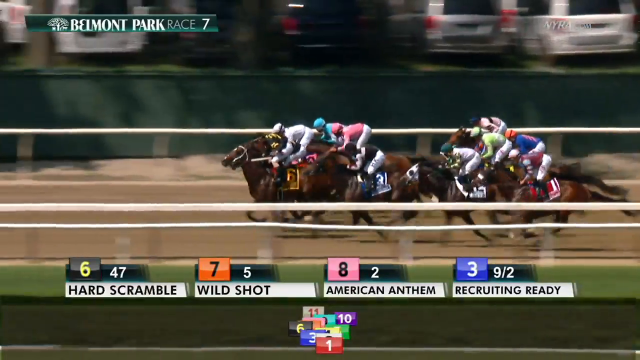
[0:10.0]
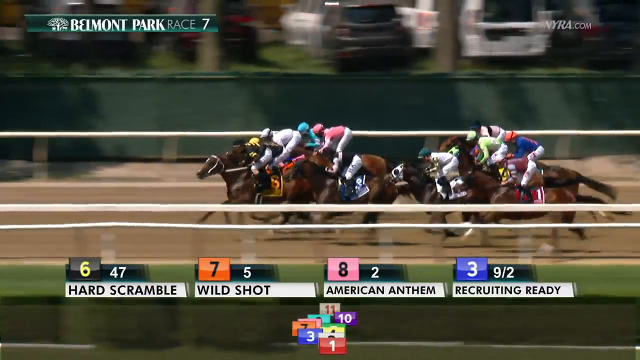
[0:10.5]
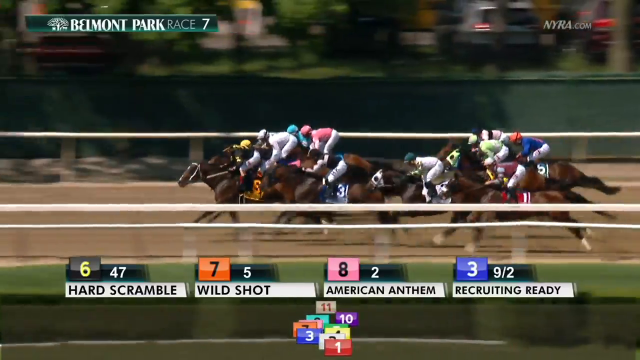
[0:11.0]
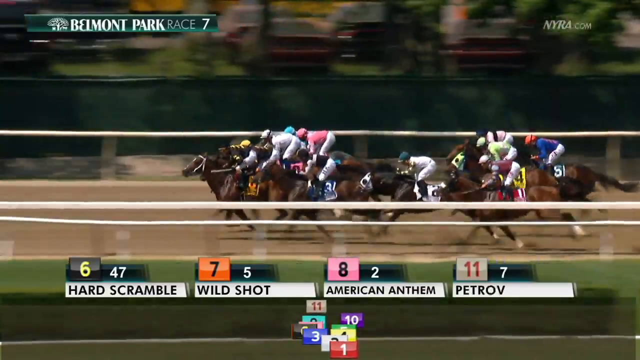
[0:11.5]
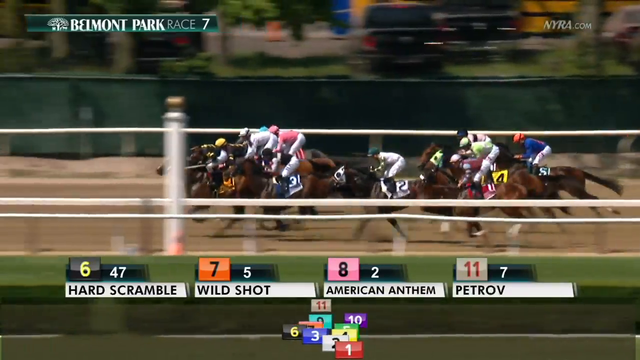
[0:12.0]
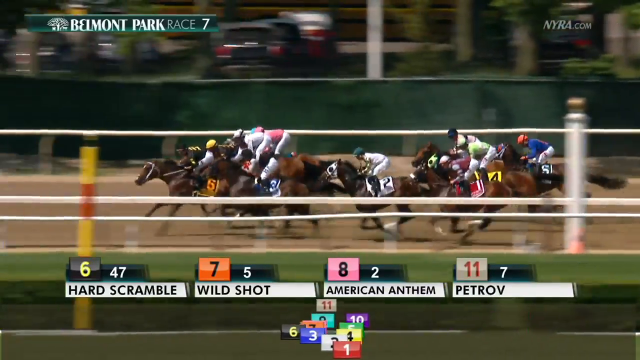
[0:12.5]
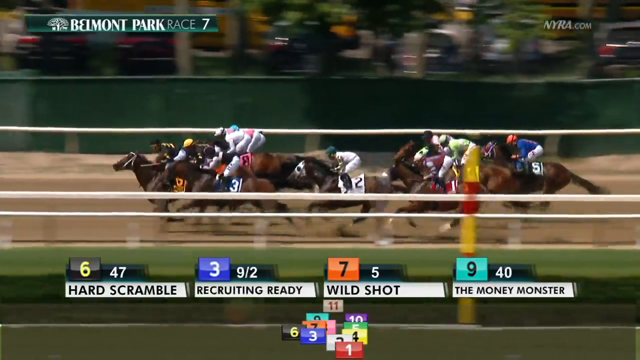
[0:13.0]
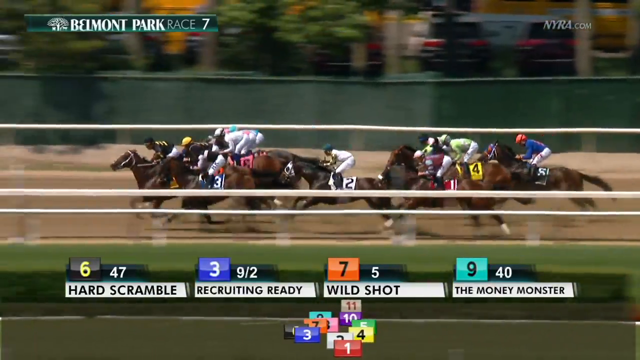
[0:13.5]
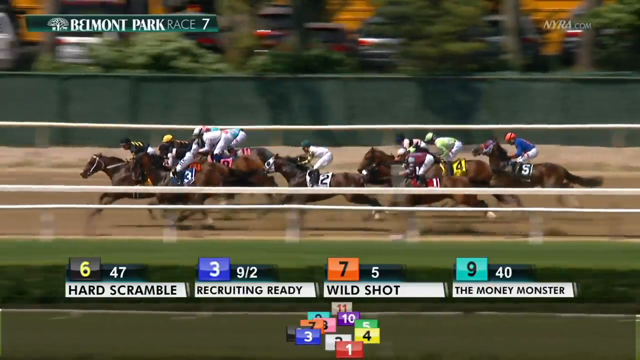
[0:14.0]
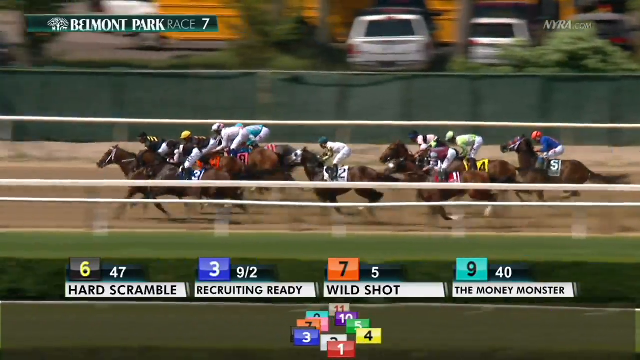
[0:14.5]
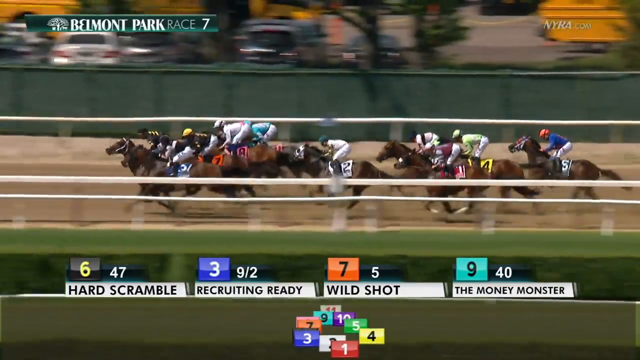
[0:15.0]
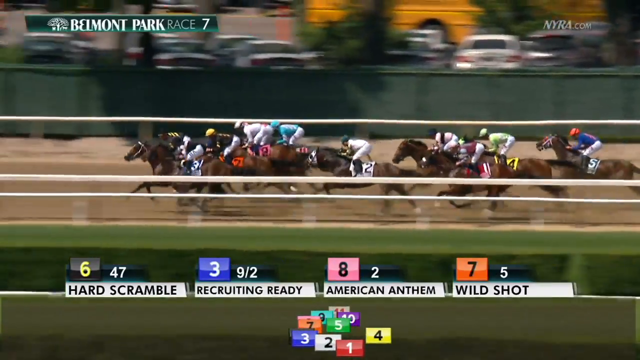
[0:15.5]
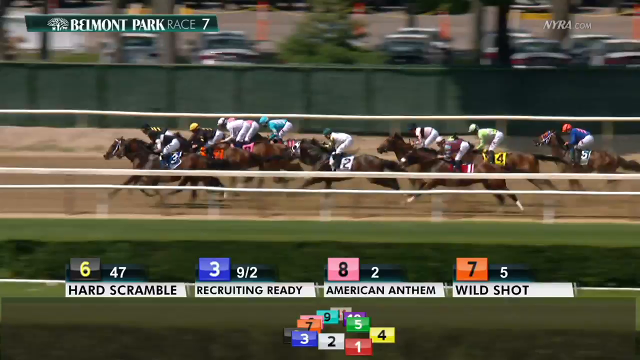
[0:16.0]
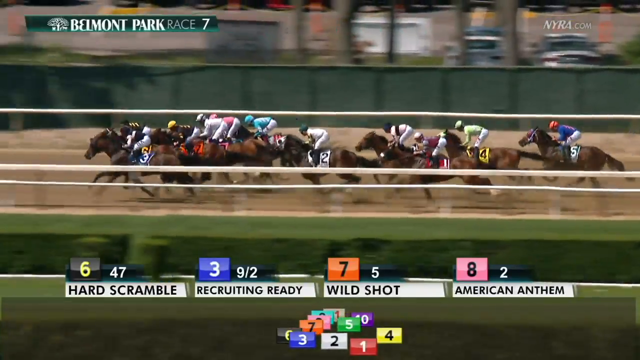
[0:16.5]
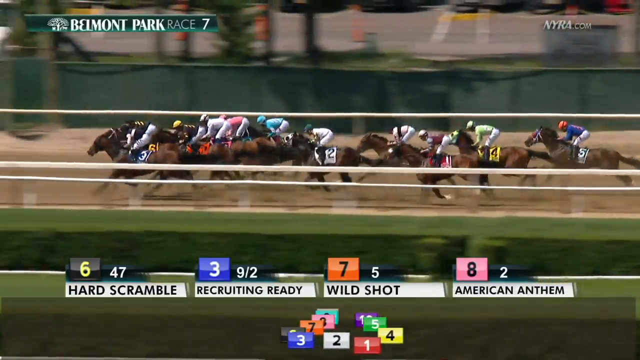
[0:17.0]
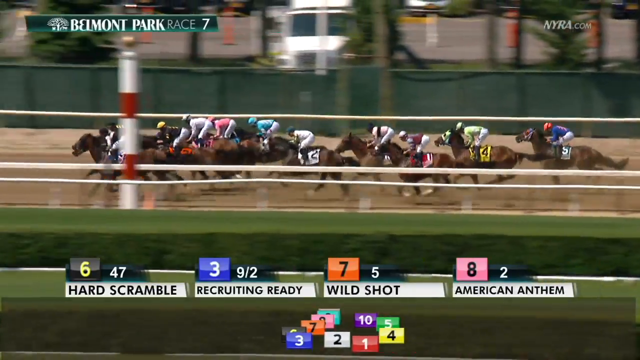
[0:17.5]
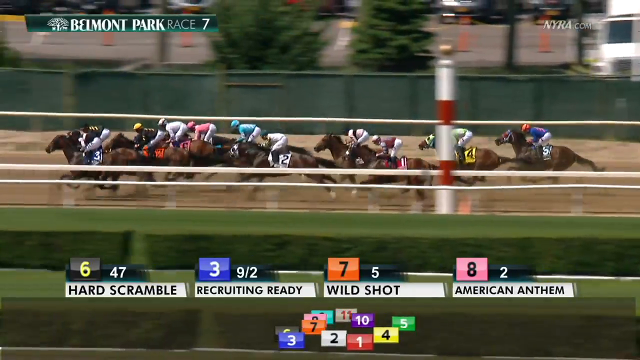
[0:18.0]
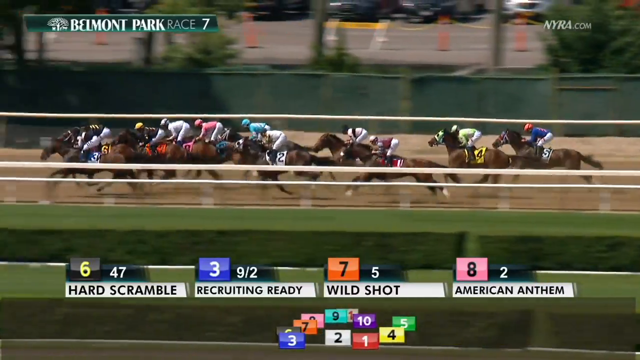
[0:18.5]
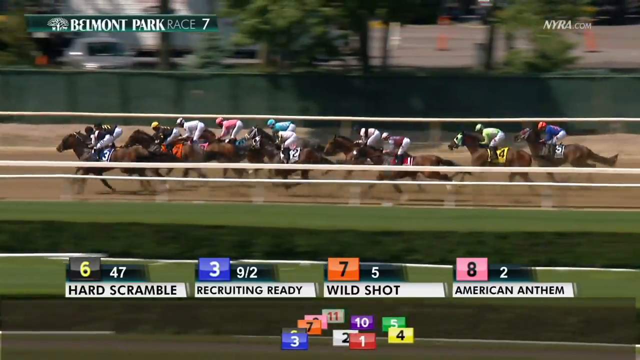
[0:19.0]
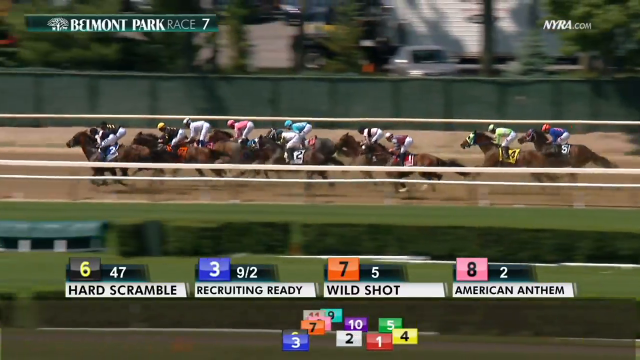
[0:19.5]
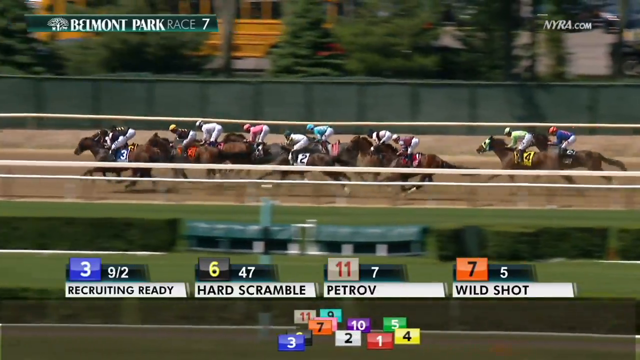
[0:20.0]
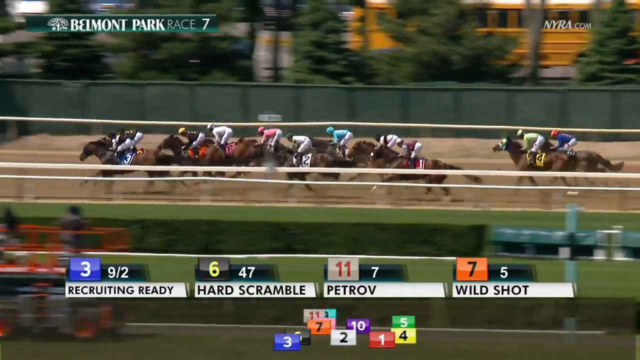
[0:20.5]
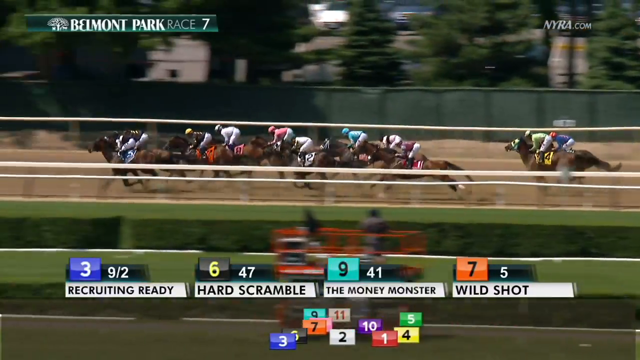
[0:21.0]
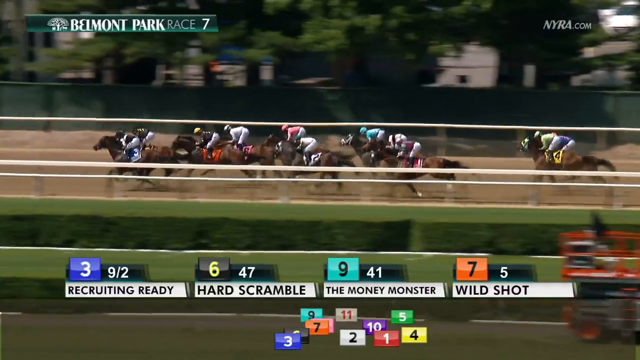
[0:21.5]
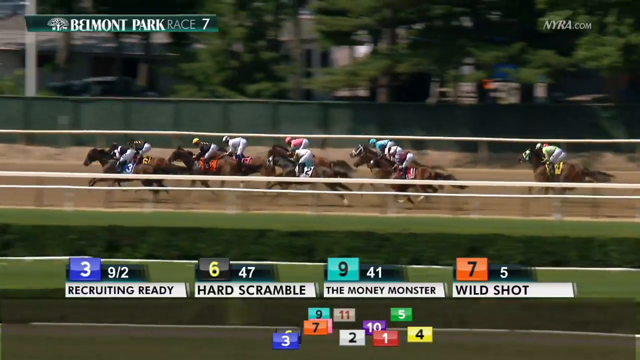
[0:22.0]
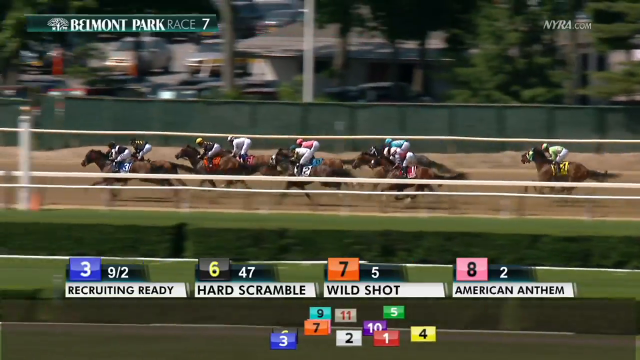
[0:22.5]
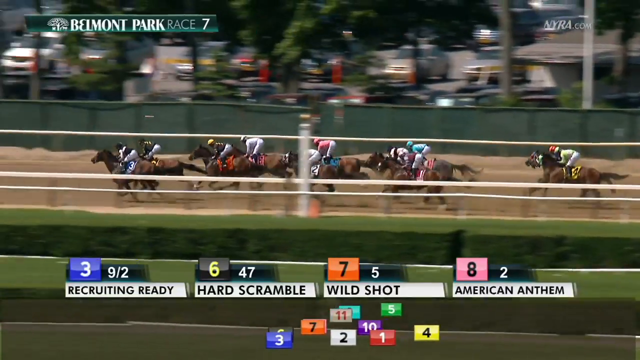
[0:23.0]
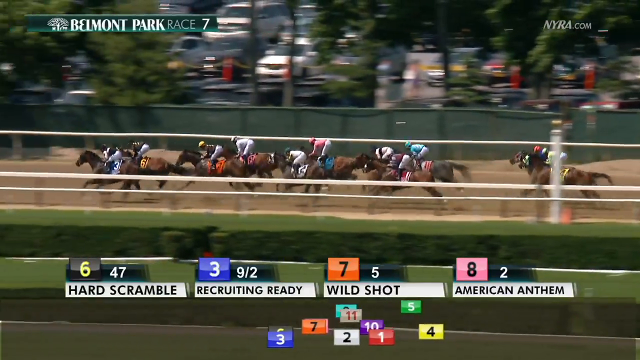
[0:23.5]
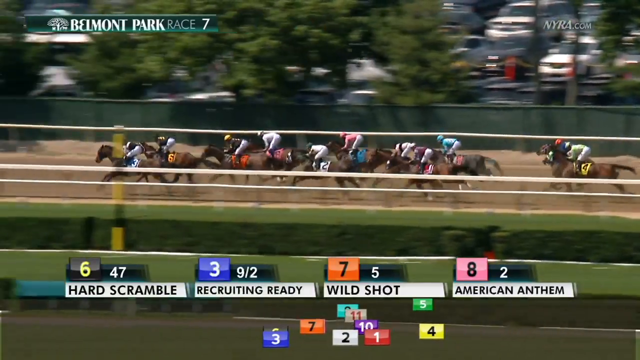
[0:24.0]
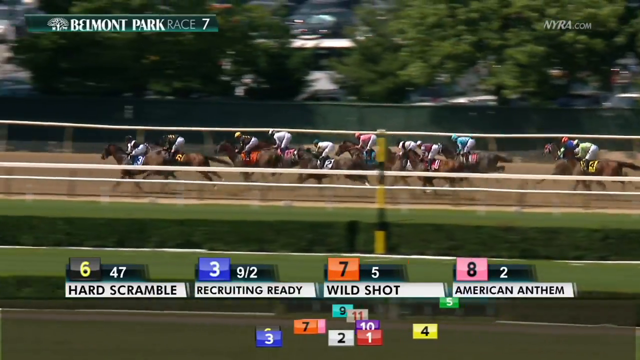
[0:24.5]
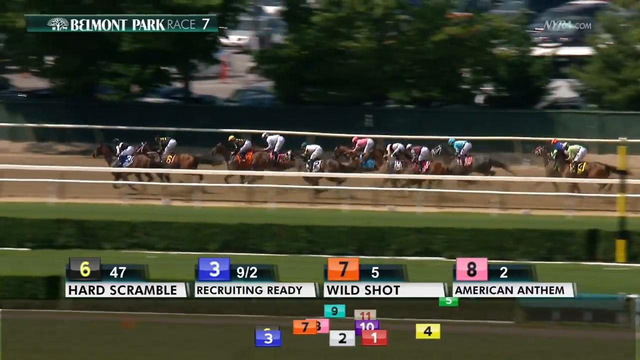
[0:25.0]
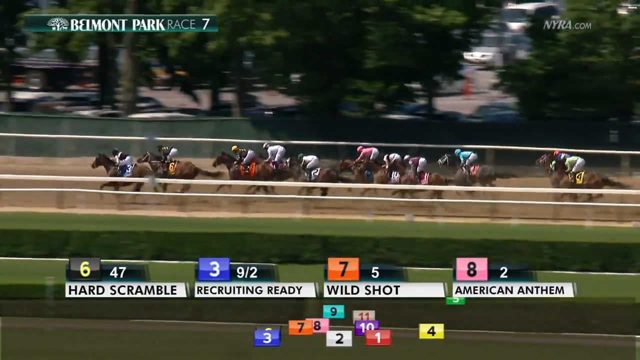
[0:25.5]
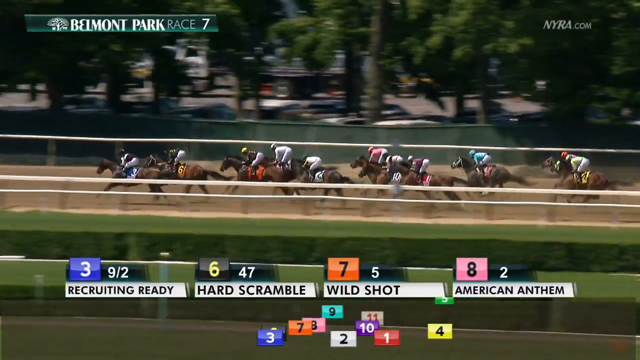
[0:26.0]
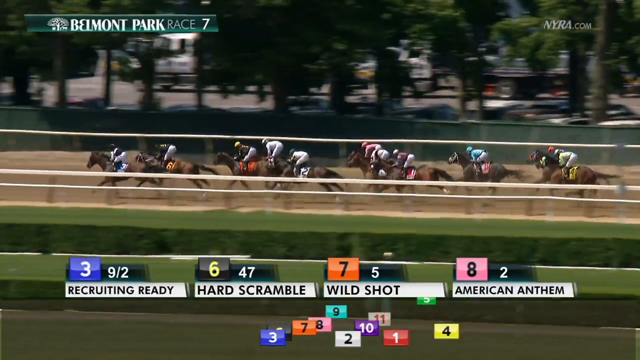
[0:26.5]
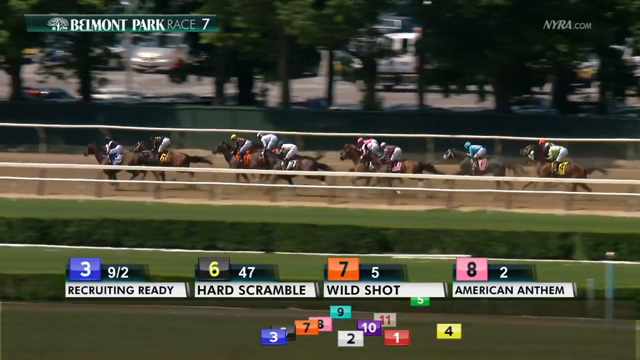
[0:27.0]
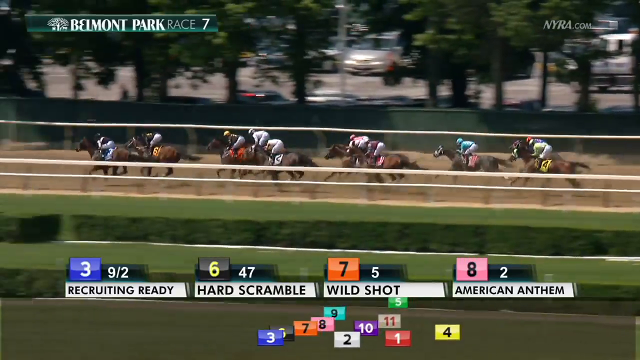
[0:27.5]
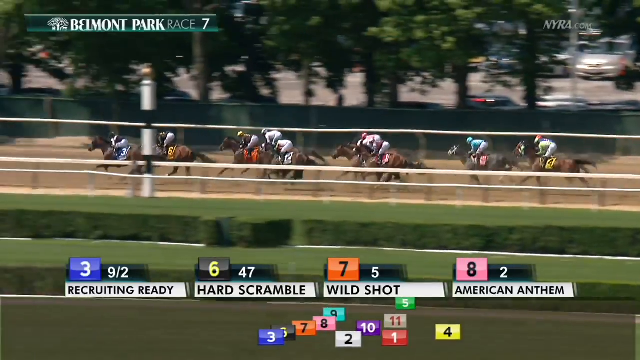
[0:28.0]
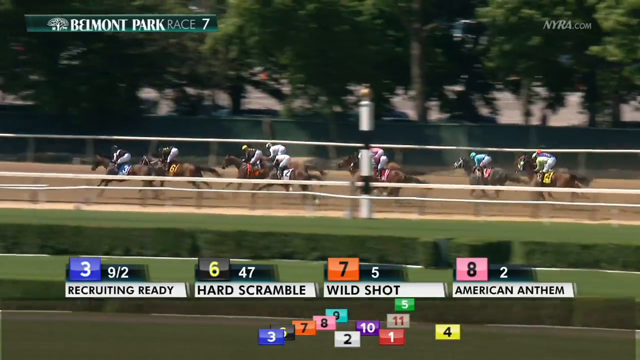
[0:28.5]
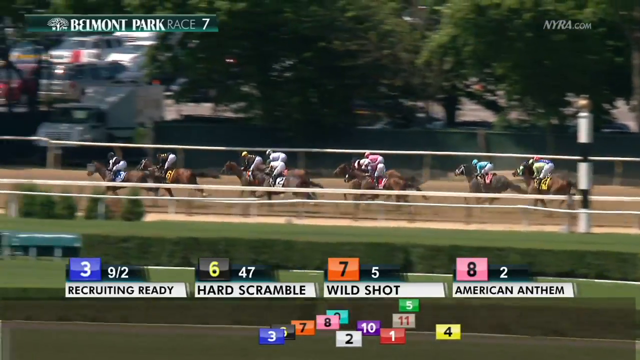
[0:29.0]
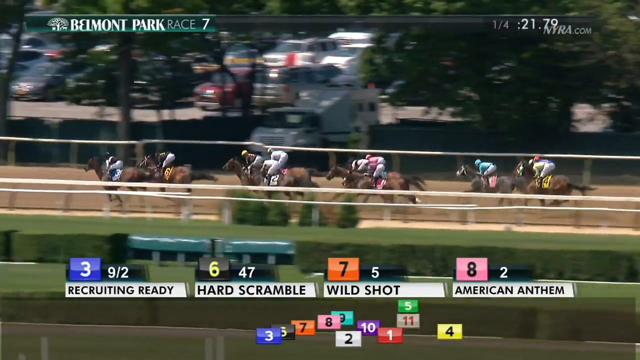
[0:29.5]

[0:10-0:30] The horses come along the straightaway, about to go into their left turn, moving quickly. Hard Scramble is about a snout ahead of the three horse, which has a blue band on its side. Text shows number three as Recruiting Ready, and "race 7" appears at the top. The camera pans, and the view seems to be from the inside track right above the hedges, almost like a first-person view; a red and white striped pole stands in the hedges. Three and six are at the front, with three taking over the inside track by about half a horse. The last horse looks like number four, about half a horse behind the others. Every horse has reins, and they all appear to have banners on their saddles with numbers; the black horse has a black banner with a number six. At the bottom of the screen, boxes float showing the positions.